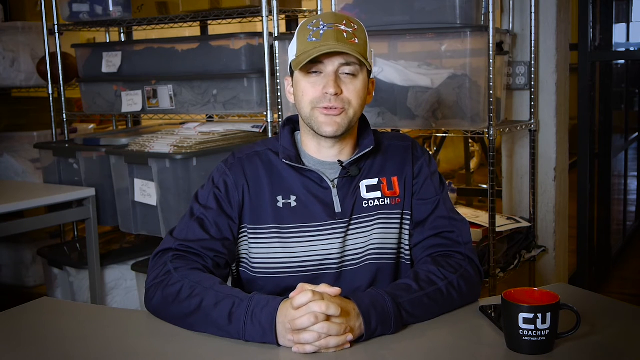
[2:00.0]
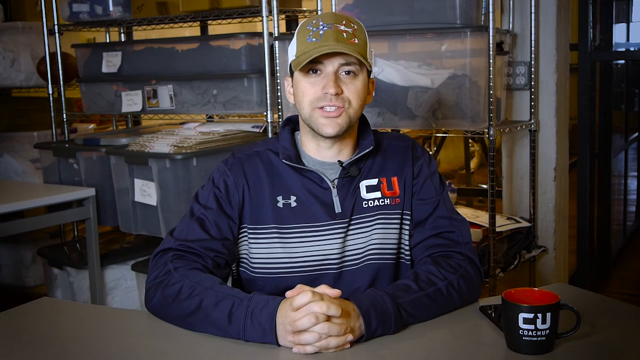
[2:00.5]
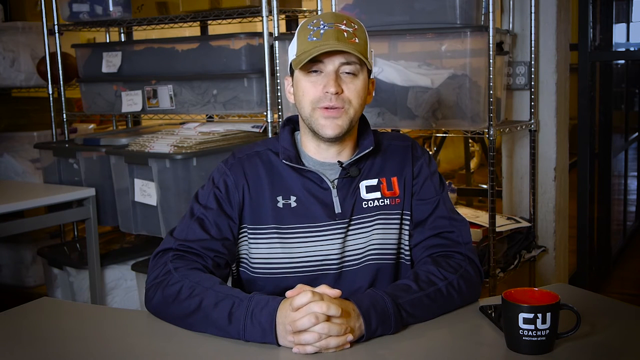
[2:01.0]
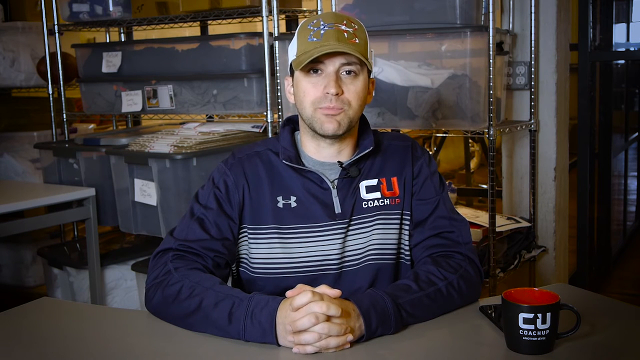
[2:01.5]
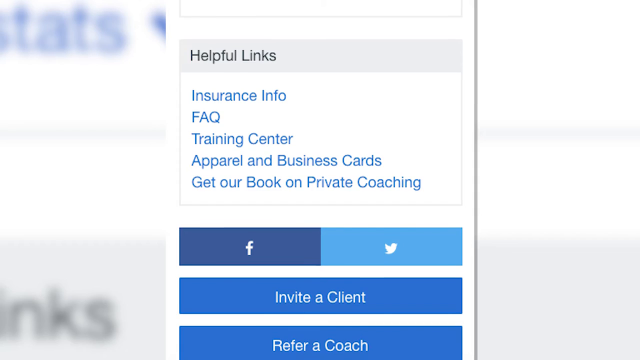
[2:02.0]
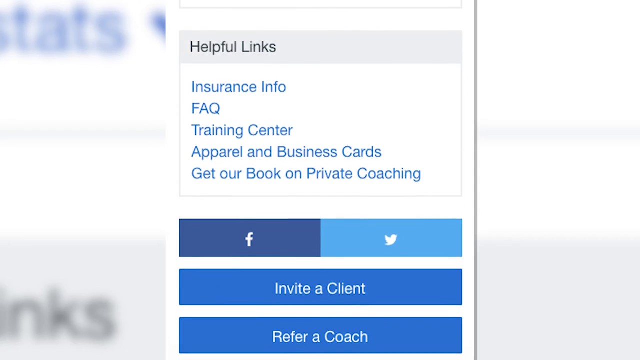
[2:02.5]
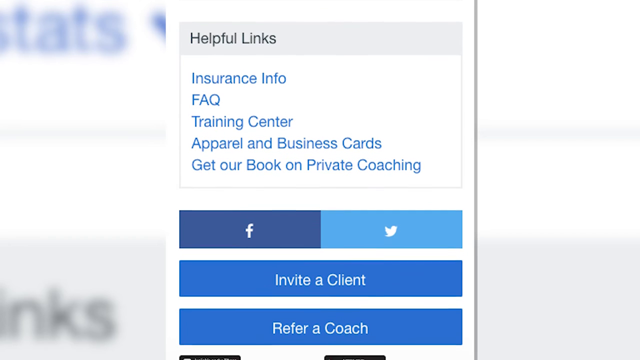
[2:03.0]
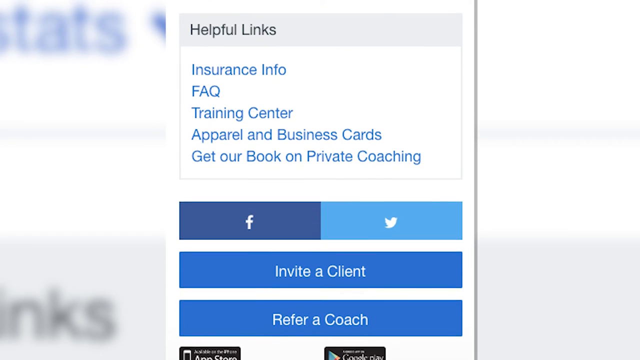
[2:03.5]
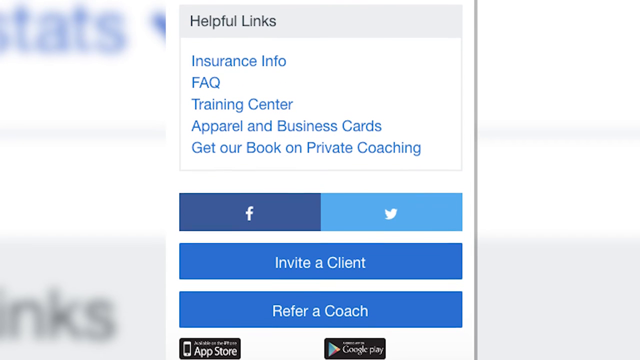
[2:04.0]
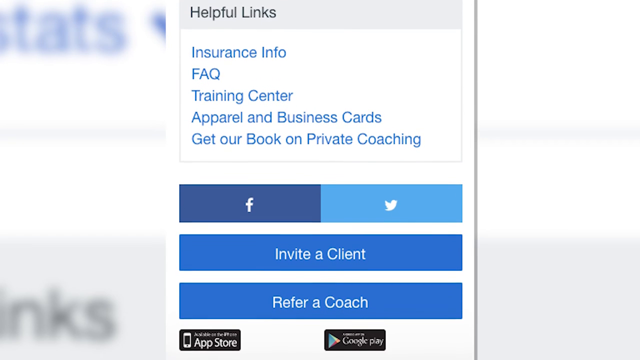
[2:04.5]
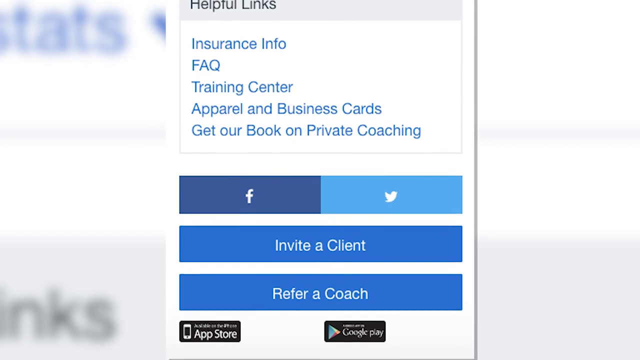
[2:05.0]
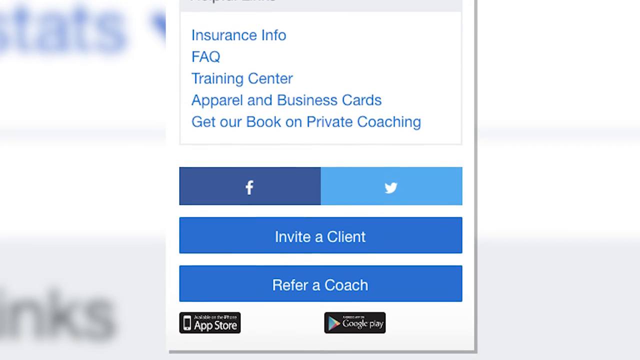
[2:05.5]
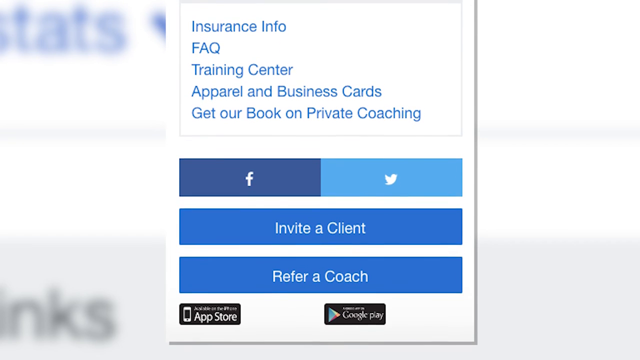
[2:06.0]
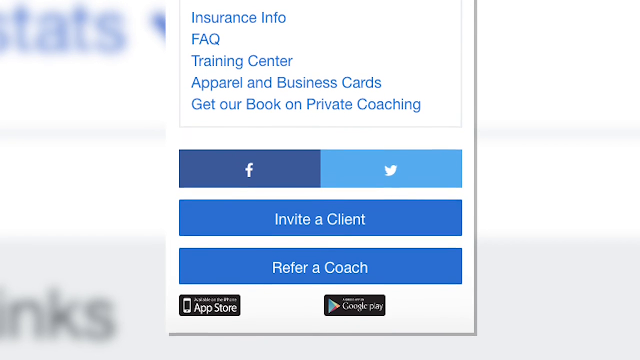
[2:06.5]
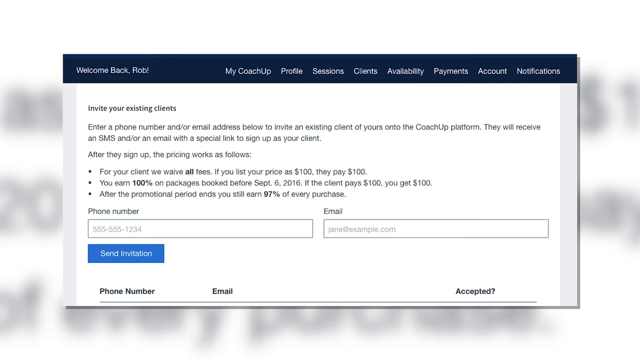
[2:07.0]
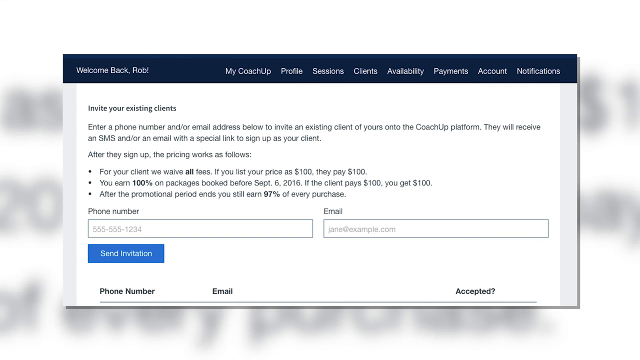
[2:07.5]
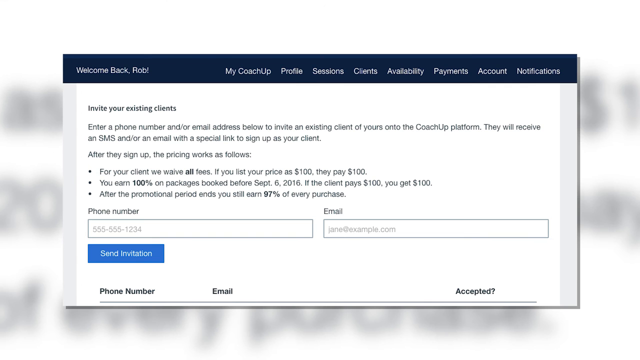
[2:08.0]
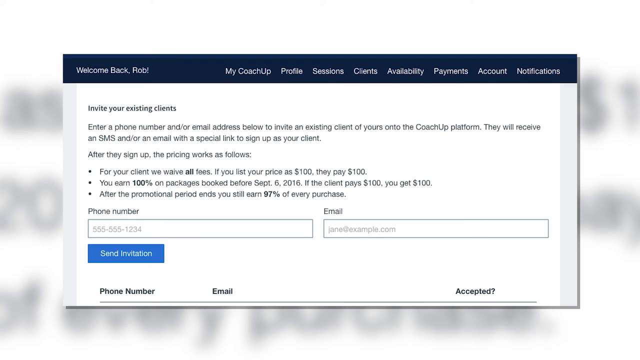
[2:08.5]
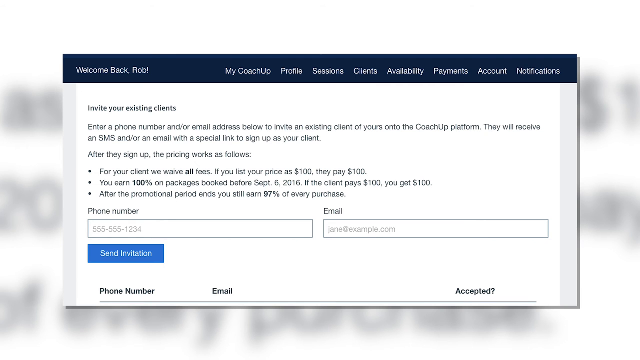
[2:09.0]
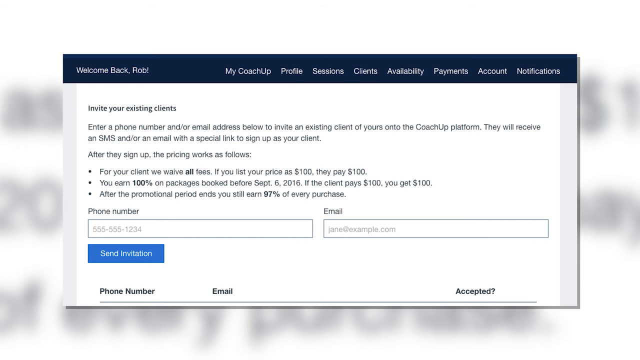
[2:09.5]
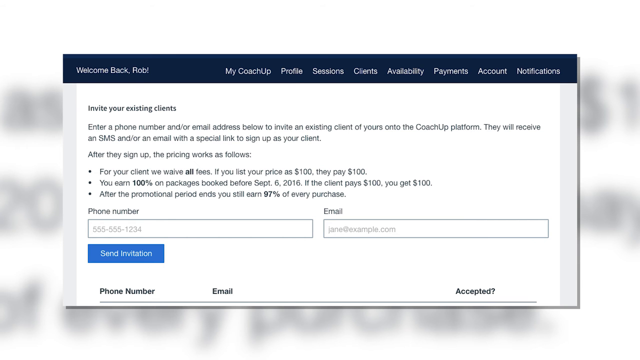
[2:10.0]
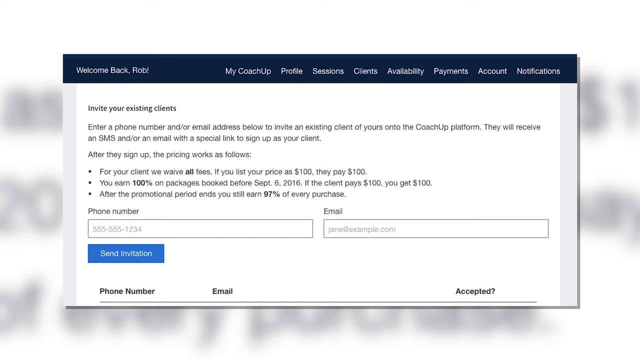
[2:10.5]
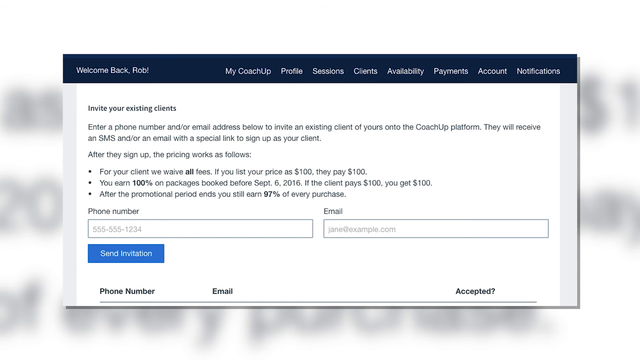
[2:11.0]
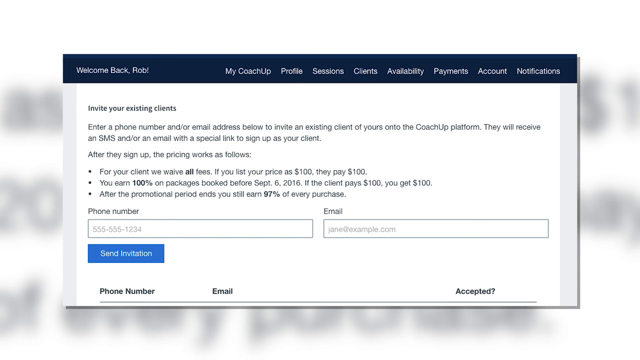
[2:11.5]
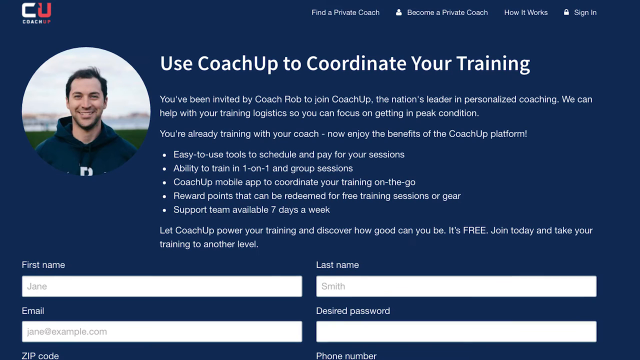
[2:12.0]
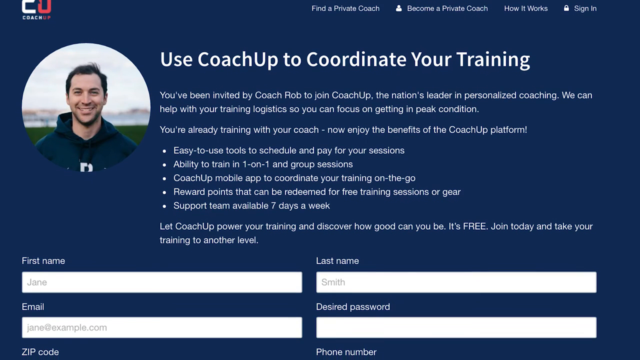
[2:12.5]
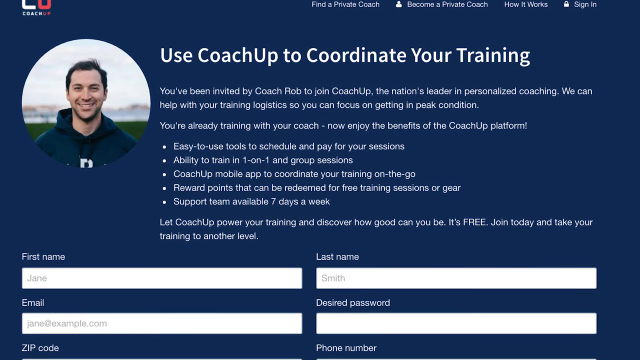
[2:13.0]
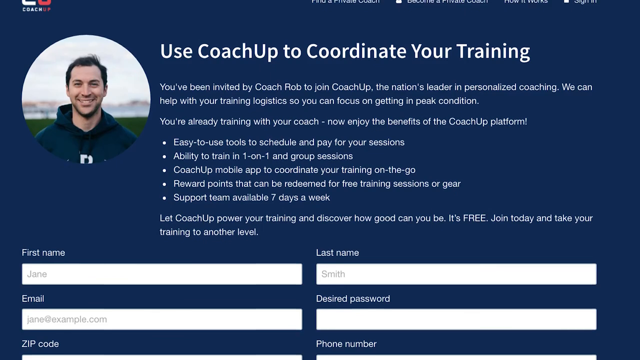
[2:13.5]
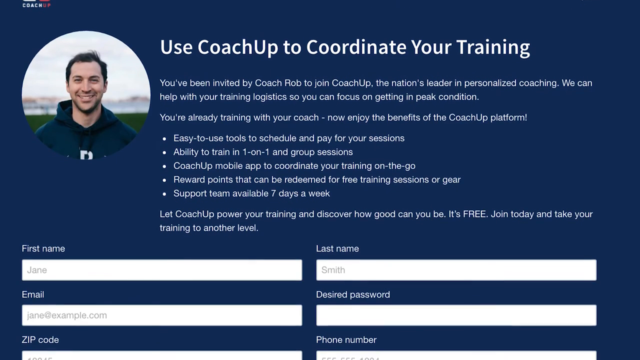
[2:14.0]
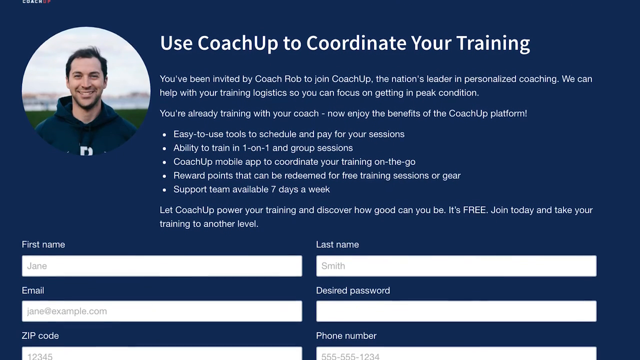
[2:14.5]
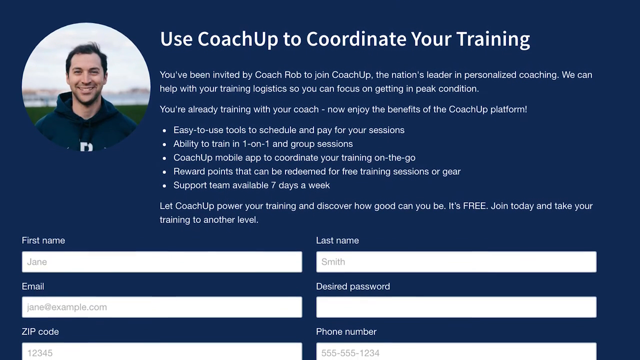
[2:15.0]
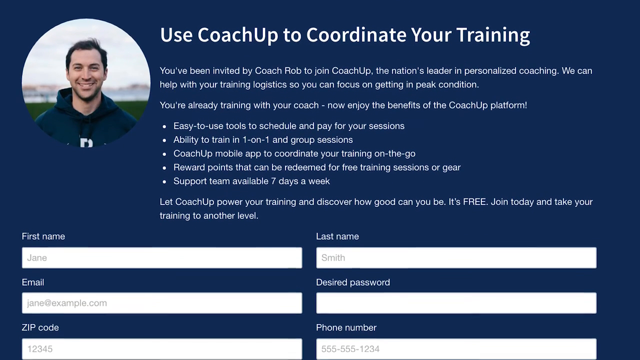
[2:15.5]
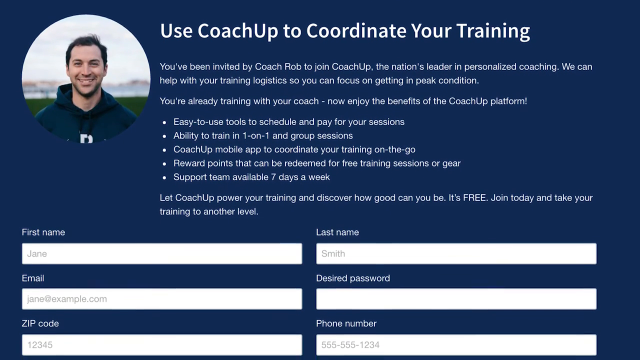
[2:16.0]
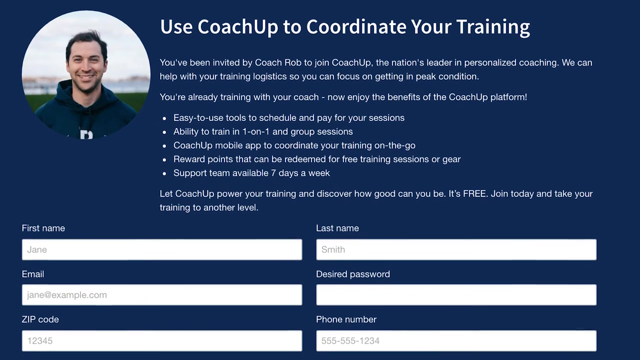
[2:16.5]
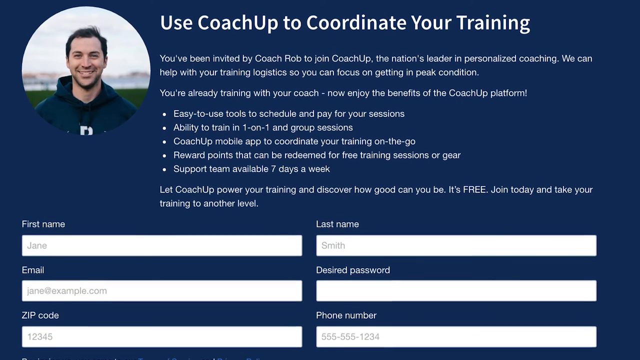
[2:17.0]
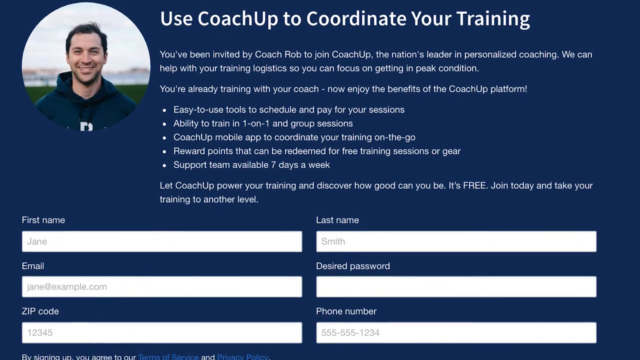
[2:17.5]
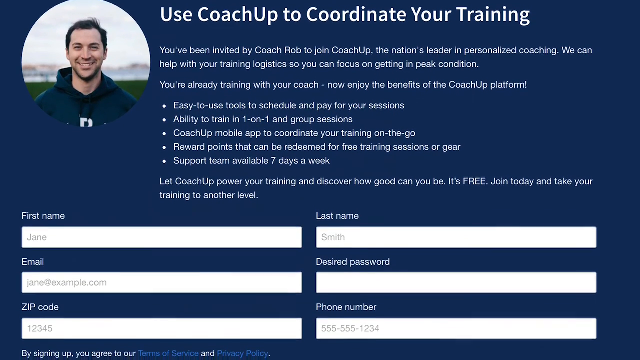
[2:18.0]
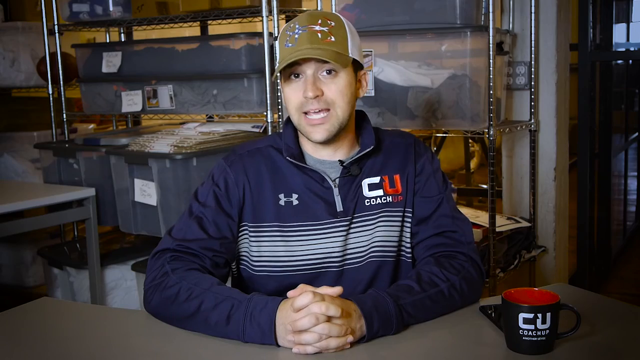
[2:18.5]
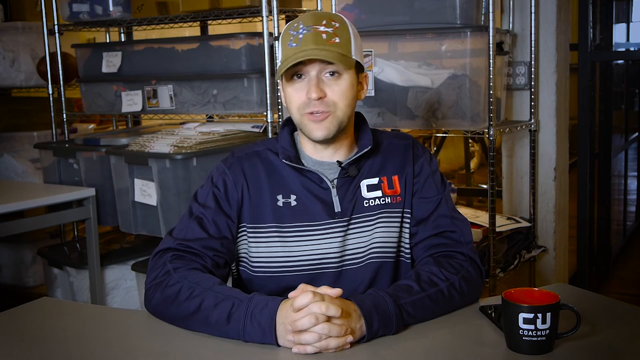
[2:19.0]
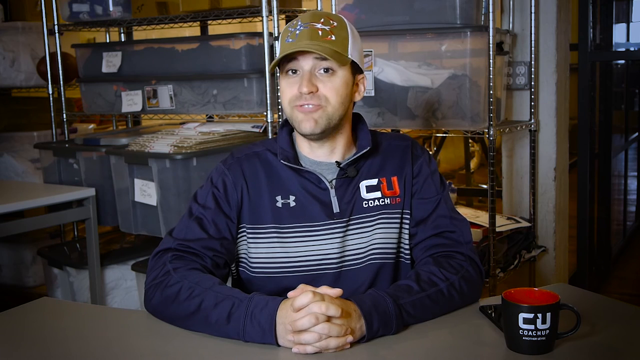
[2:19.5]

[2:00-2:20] A man talks on camera in what looks like a home office area. The video quickly transitions to a page where a helpful links box has popped up. Underneath are links including "insurance info," "PAC," "training center," "apparel and business cards" and "get our book on private coaching." Below those are buttons for Facebook and Twitter, then two buttons, "invite a client" and "refer a coach," and beneath those, links to the Google Play Store and the Apple App Store. A final page is about how to use CoachUp to coordinate training, with boxes for first name, last name, email and password to join CoachUp.